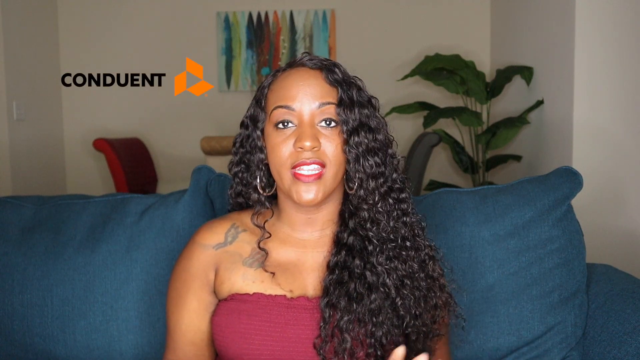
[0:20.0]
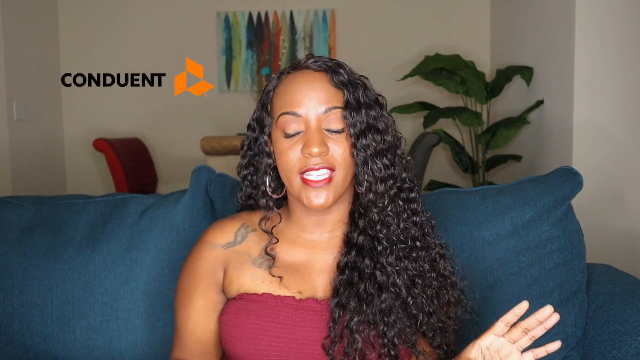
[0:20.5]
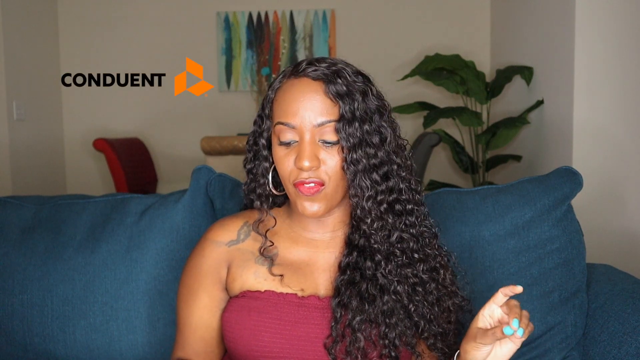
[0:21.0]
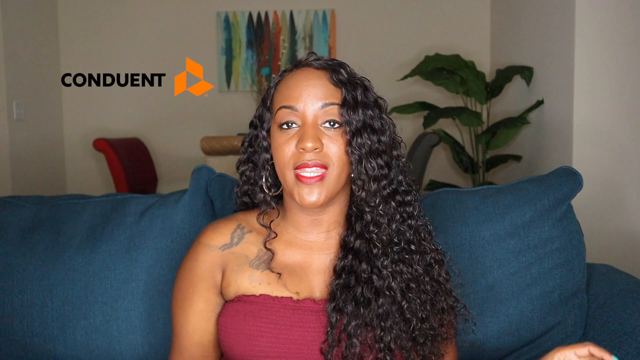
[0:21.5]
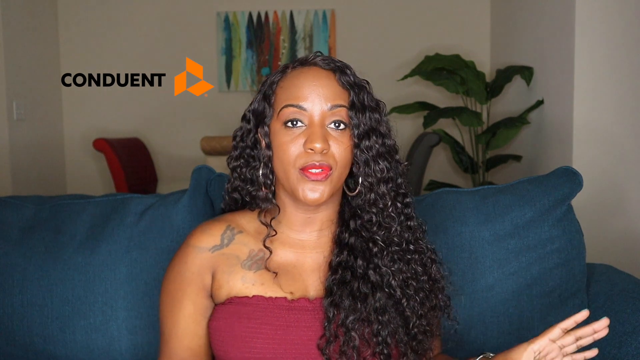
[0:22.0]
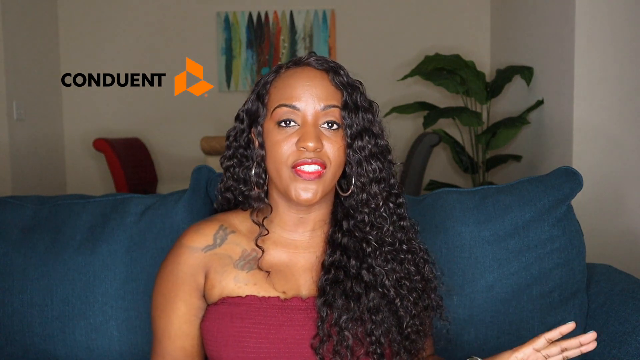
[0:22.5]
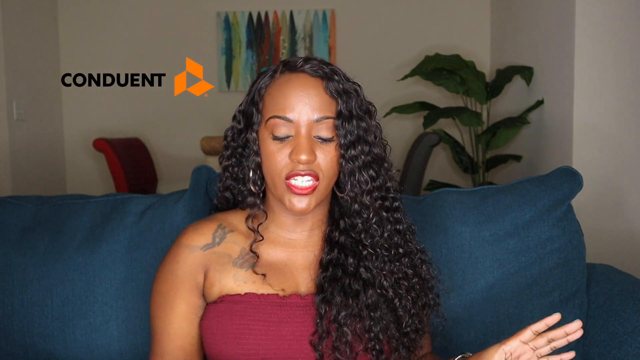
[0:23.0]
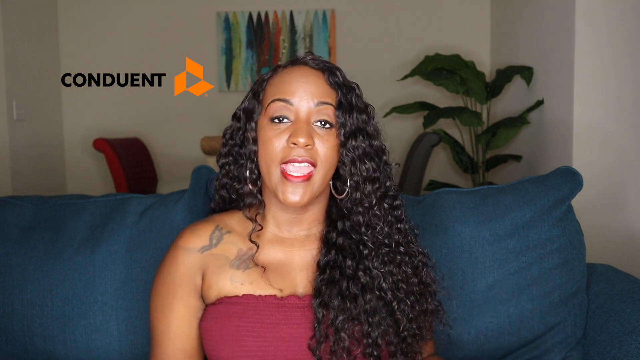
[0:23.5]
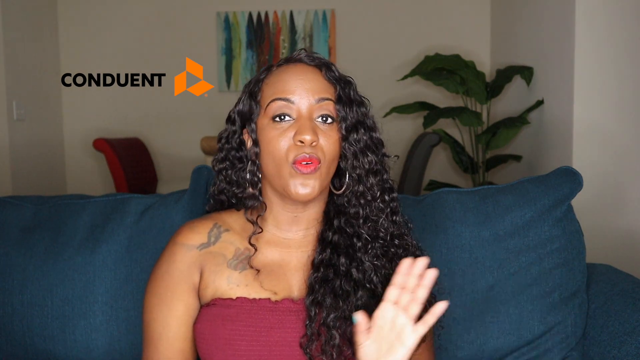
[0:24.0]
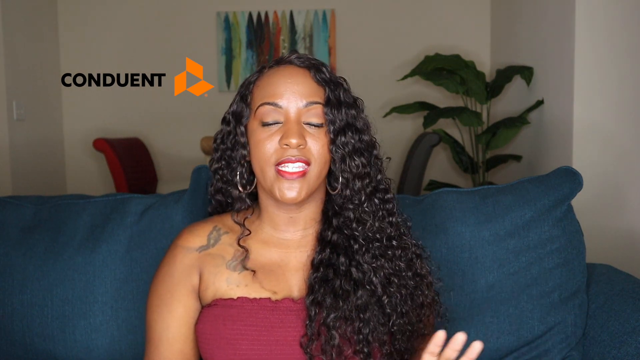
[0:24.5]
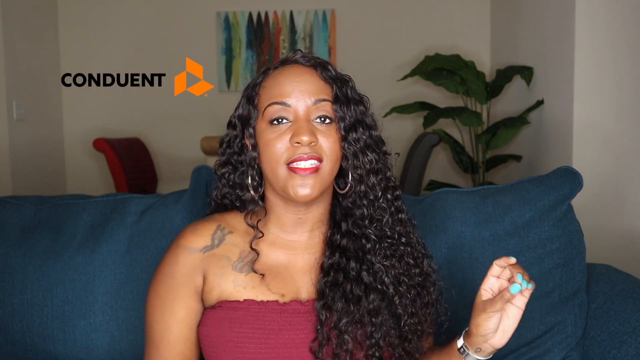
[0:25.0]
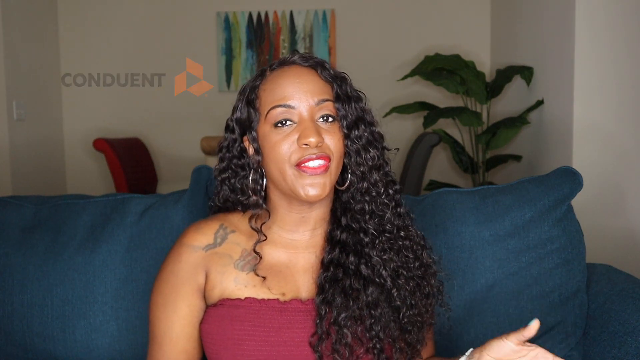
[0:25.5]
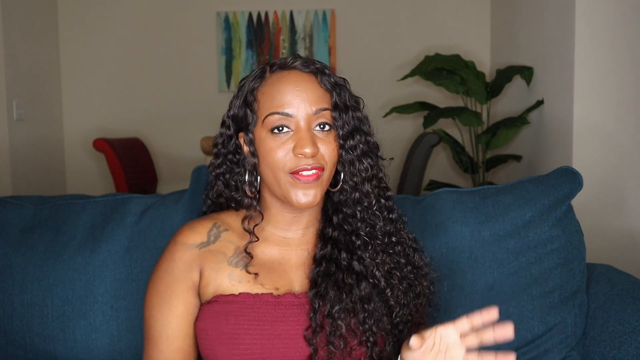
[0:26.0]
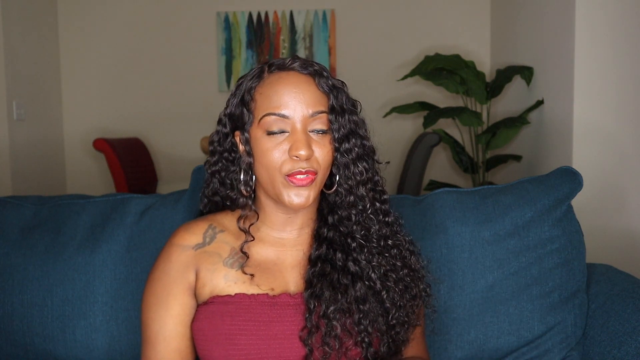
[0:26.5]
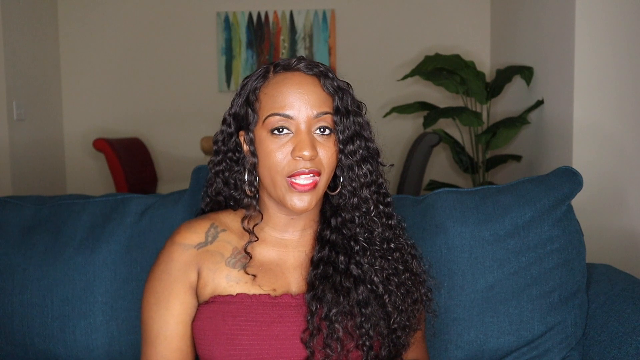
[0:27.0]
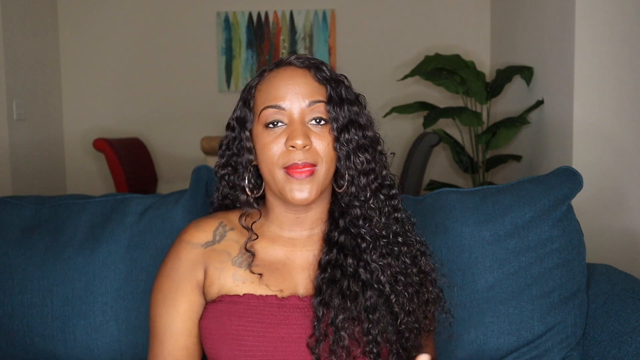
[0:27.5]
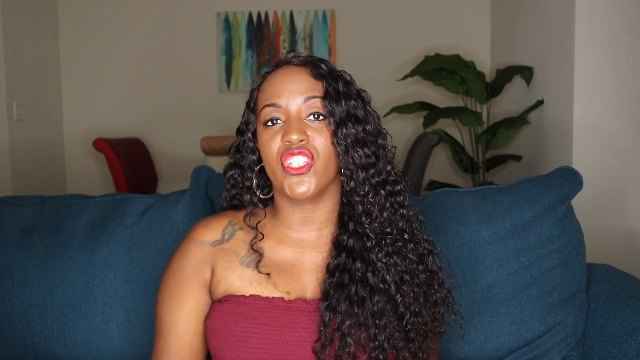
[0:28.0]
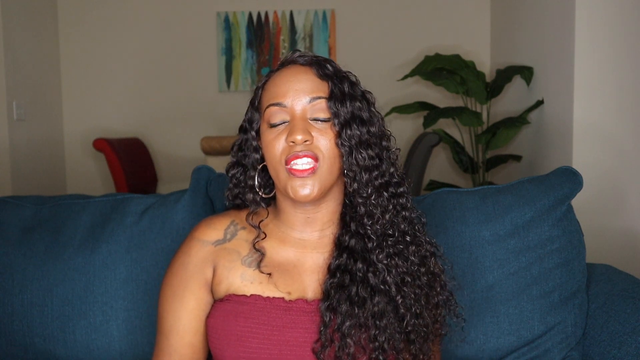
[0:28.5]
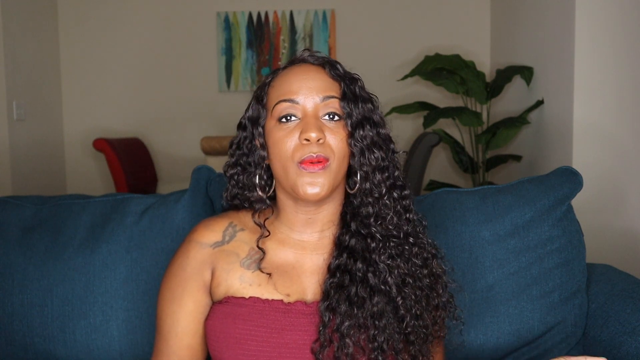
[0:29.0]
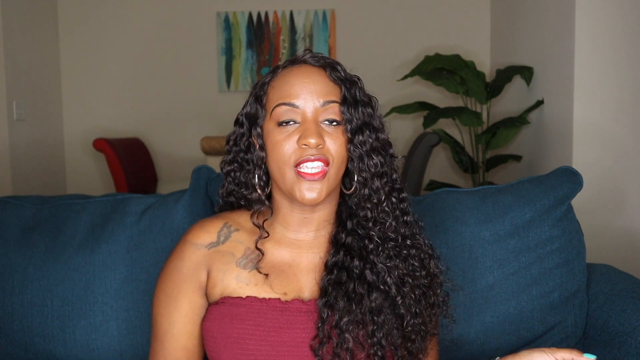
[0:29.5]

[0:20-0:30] A description on the first page reads "lovely lession, work from home, jobs and more." Someone at an Apple desktop computer is typing; two hands are visible, and the person is also holding a mouse. Next, a dark-skinned lady appears seated on a sofa, seemingly at home, and she is talking. Links to Instagram and Facebook are given. The setting is at home, as shown by the tables, the chairs and sofas in the background, and a painting on the wall just behind her. Before the video ends, the word "conduent" appears with a logo.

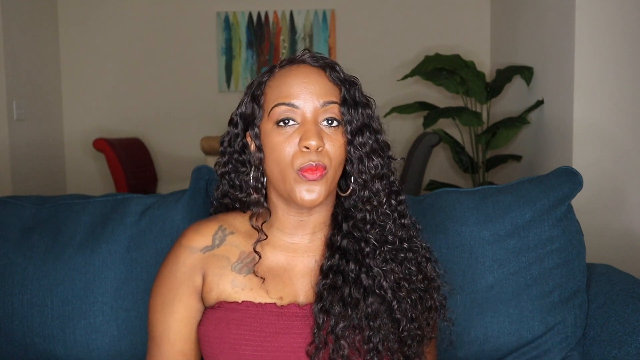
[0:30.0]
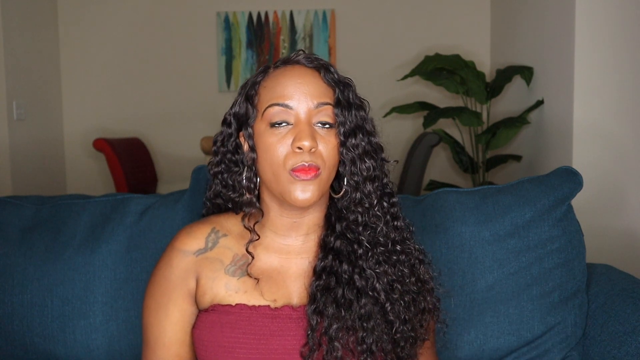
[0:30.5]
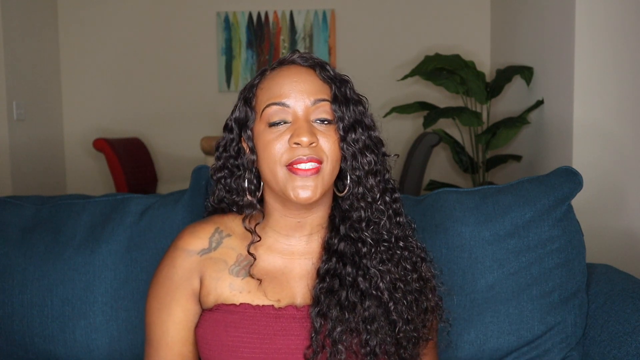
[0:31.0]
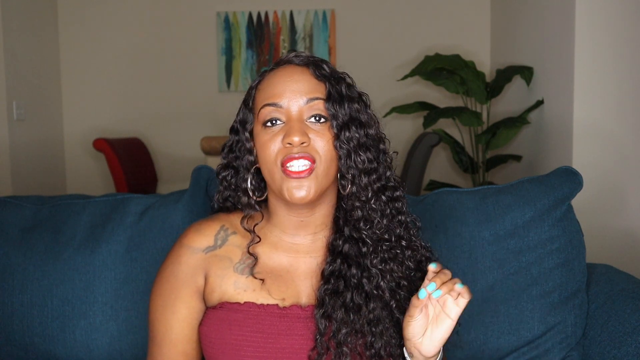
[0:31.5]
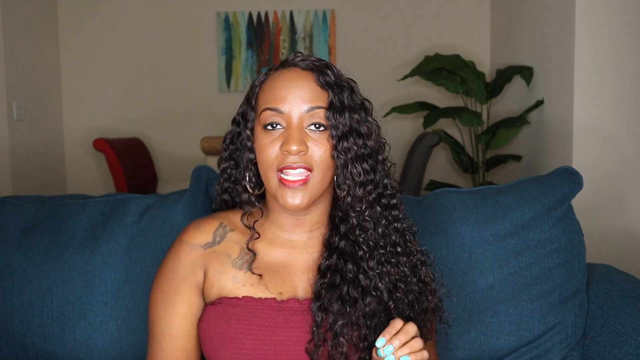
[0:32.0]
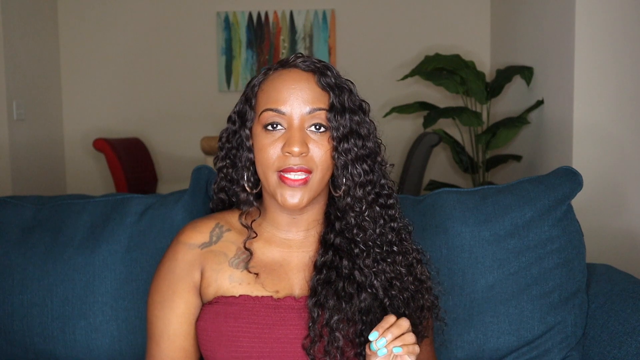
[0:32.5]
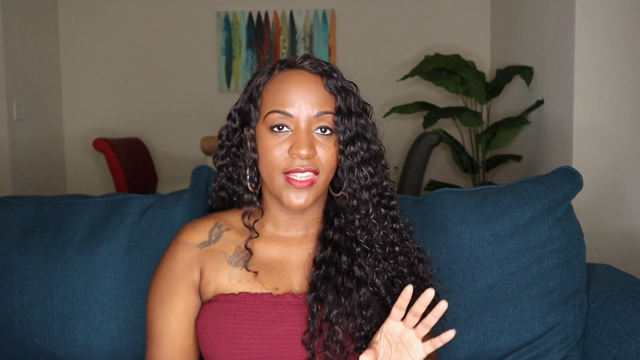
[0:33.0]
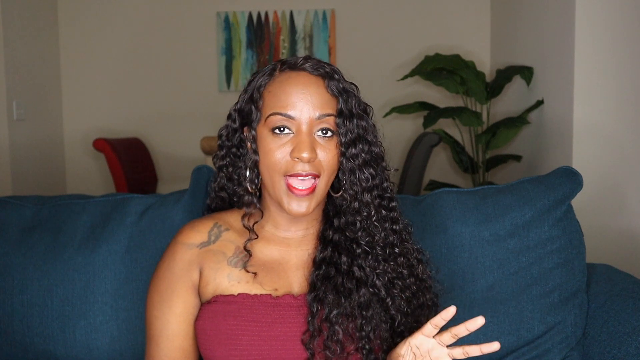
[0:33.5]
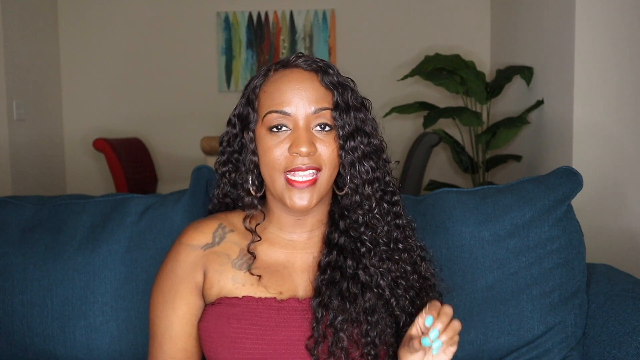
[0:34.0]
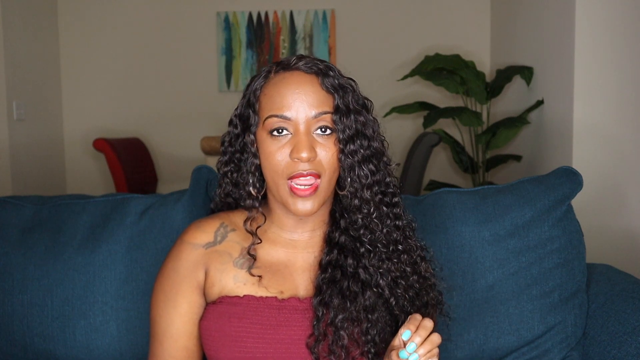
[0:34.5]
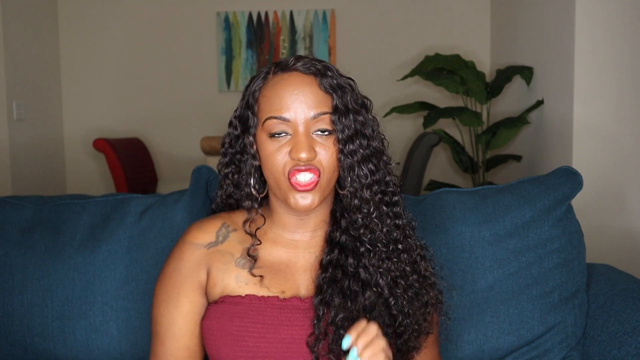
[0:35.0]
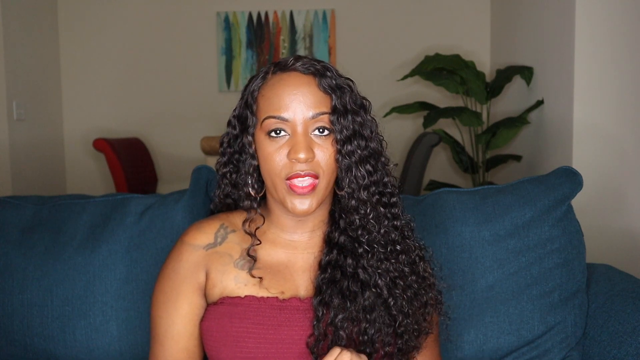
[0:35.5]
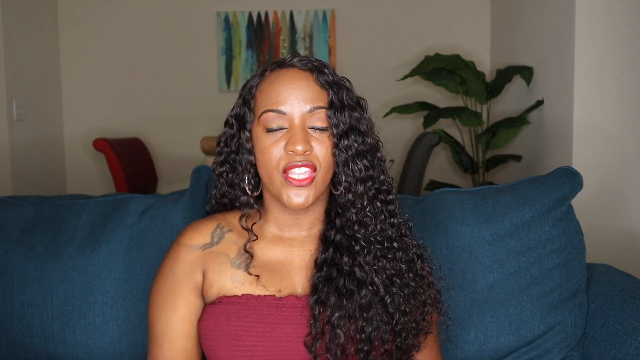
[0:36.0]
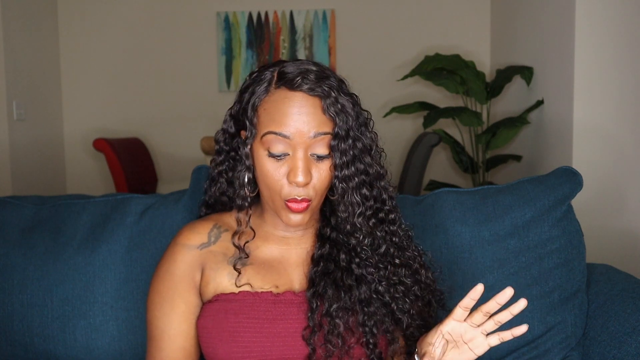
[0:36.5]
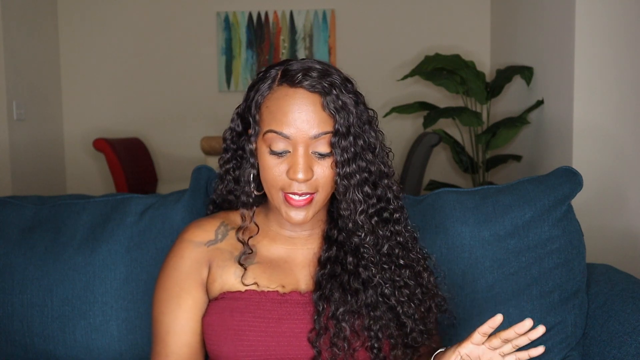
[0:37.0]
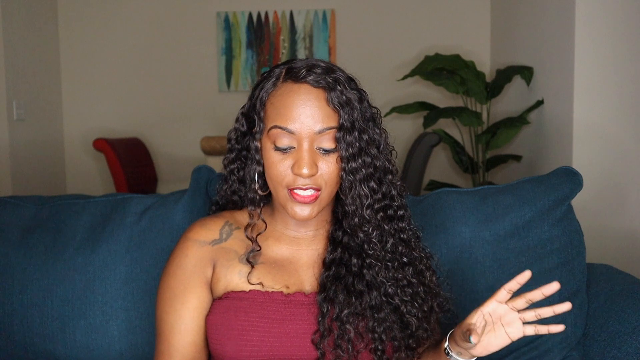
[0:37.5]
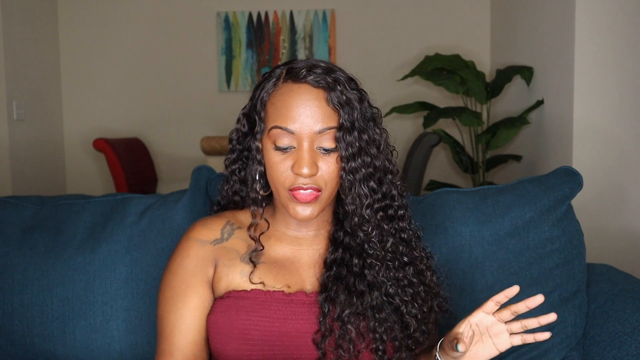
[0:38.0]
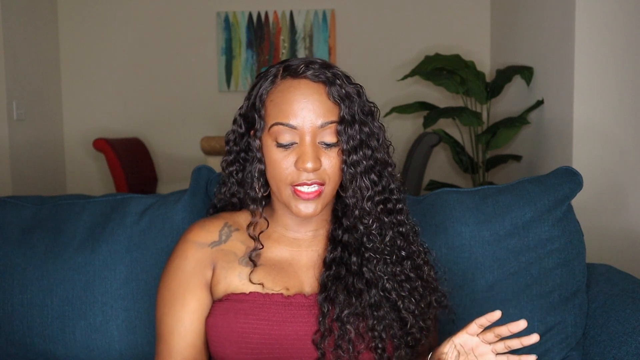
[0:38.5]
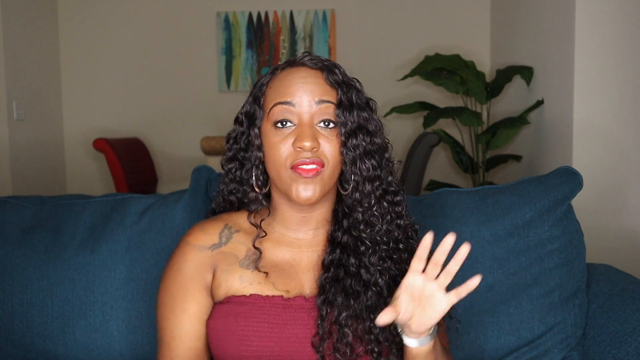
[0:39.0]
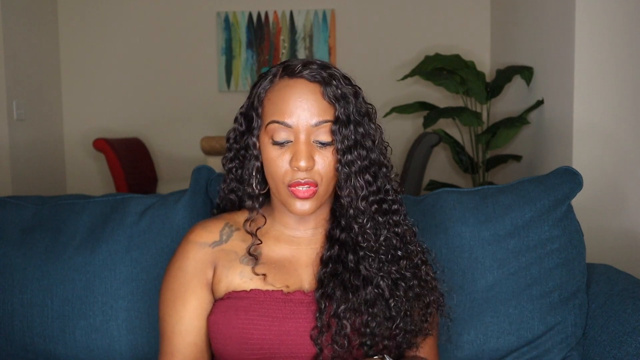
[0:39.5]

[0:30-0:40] Words describing the content appear first: "lovely, lession, work from home jobs." Then the hands of someone typing on a MacBook desktop computer are shown. Next, a dark-skinned lady appears, seated on a sofa in what seems to be her own home, and she is talking. There appears to be a link to Facebook and Instagram pages. The setting is at home, shown by tables in the background, the sofa, flowers, and a painting on the wall in the background. The word "conduent" pops up along with its logo and disappears before the video ends.